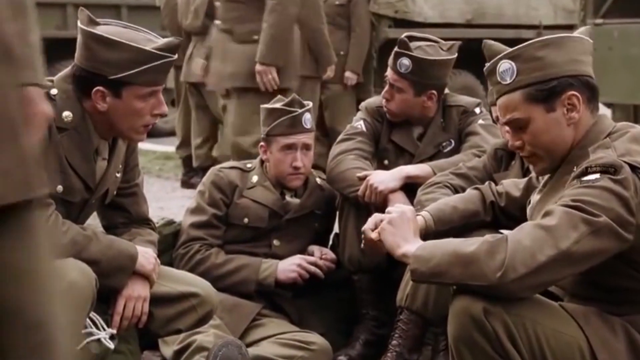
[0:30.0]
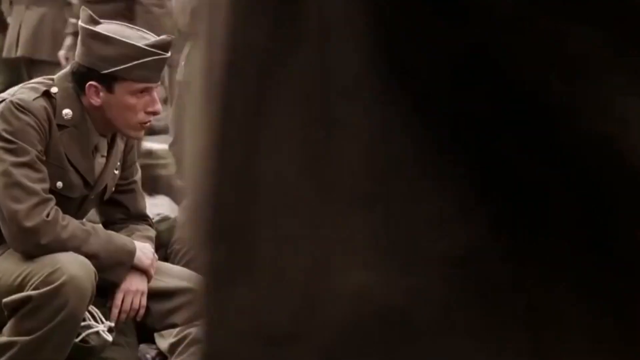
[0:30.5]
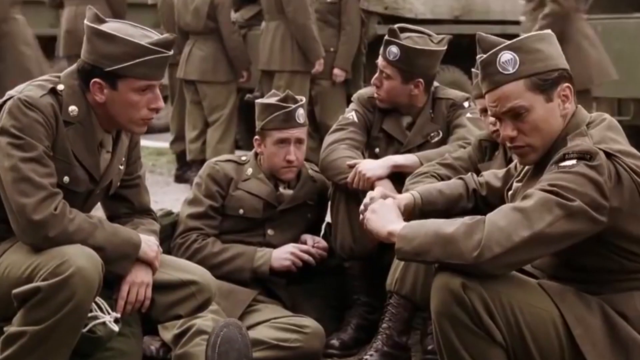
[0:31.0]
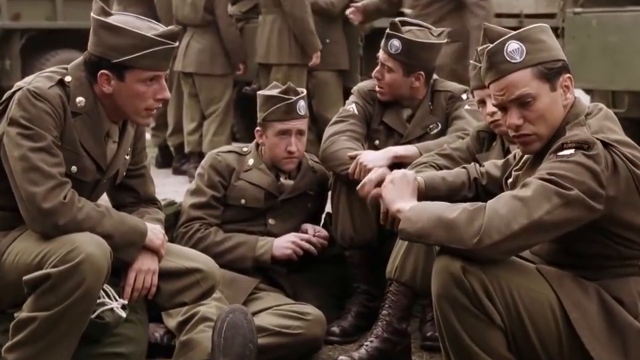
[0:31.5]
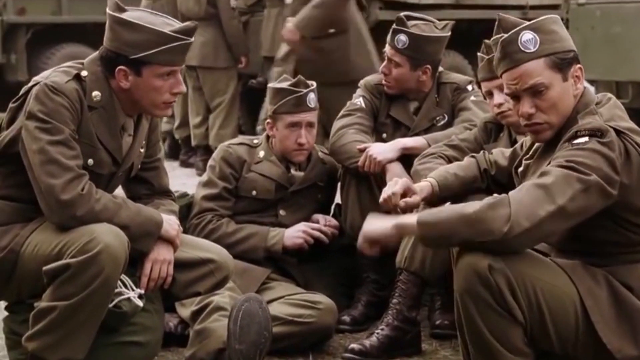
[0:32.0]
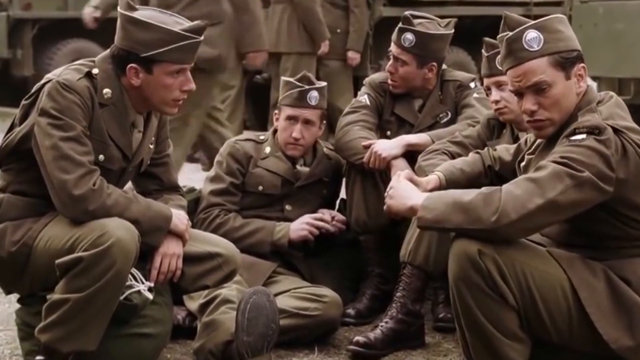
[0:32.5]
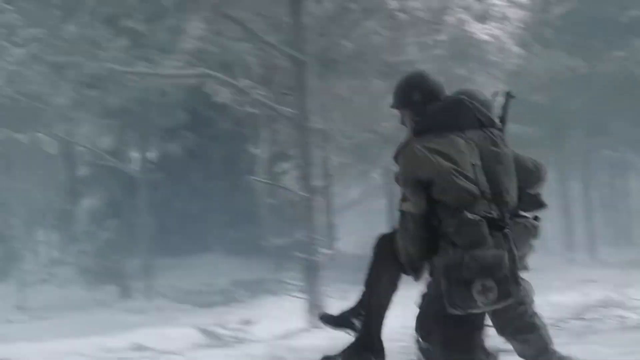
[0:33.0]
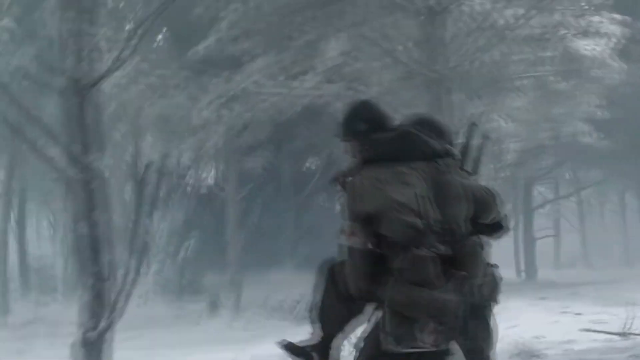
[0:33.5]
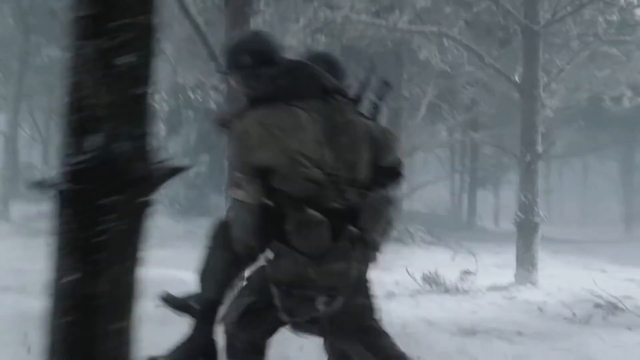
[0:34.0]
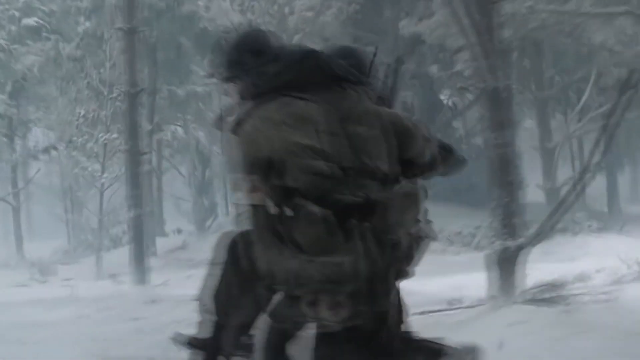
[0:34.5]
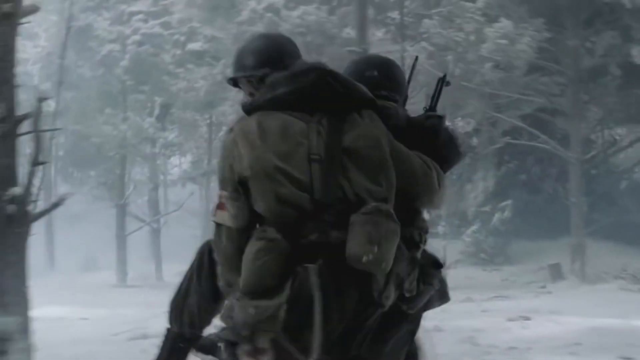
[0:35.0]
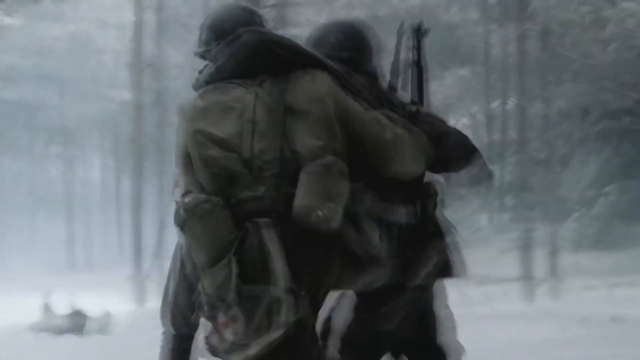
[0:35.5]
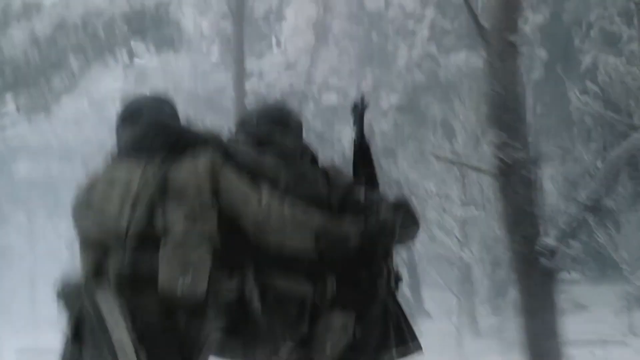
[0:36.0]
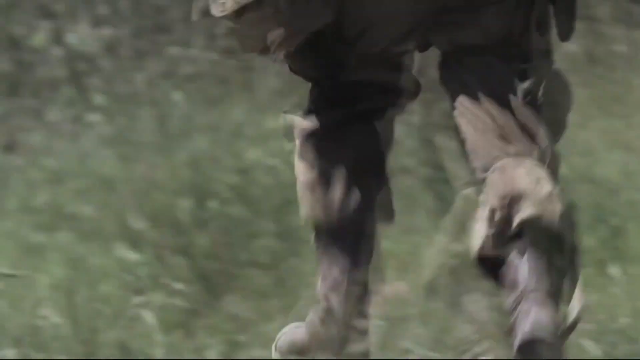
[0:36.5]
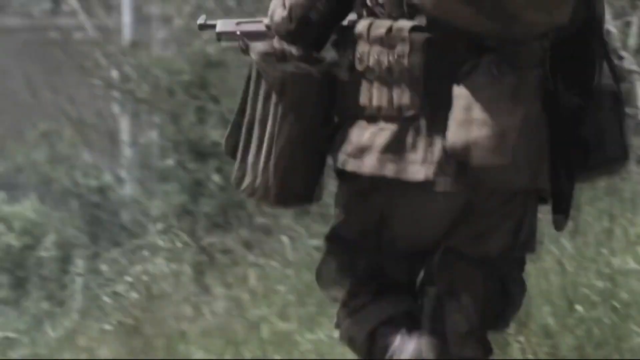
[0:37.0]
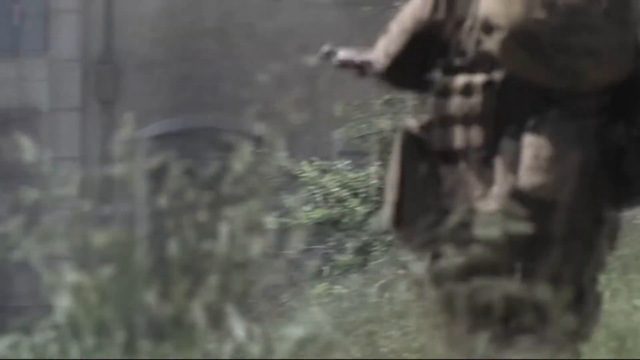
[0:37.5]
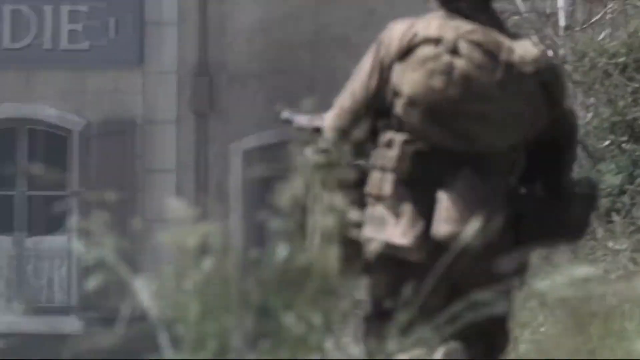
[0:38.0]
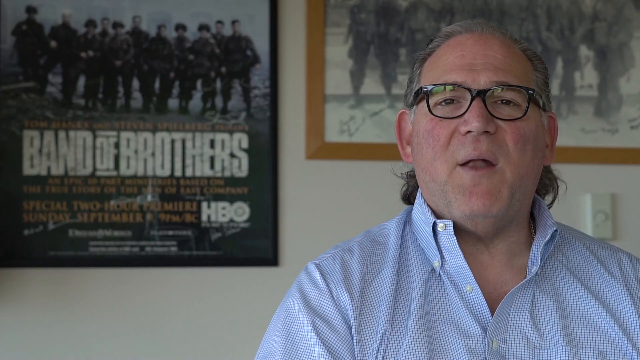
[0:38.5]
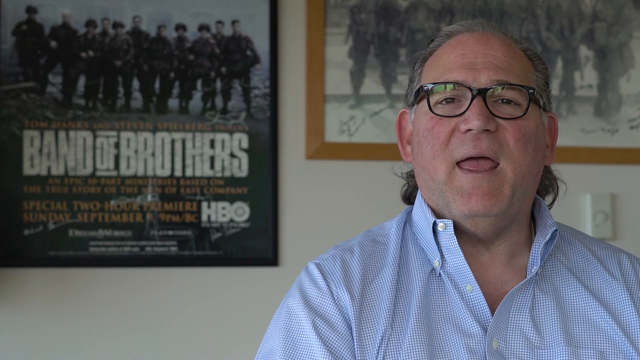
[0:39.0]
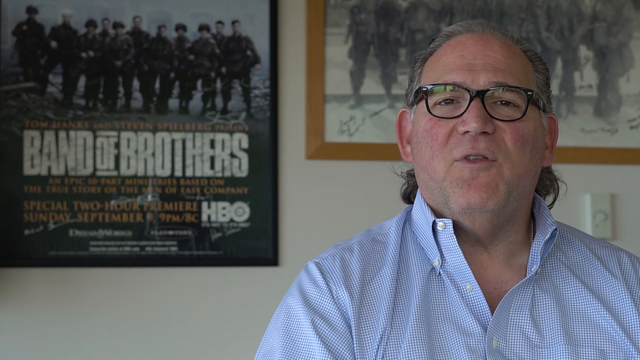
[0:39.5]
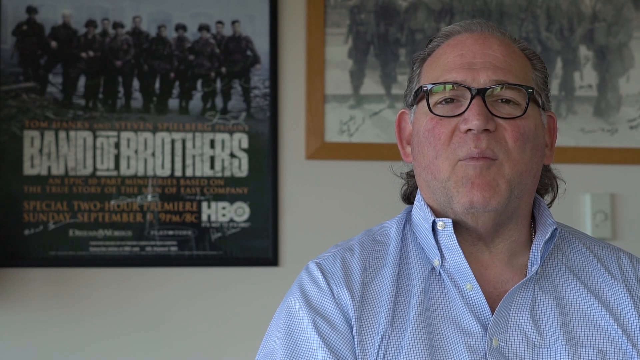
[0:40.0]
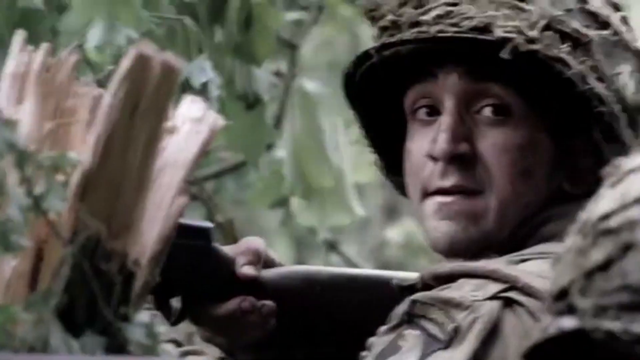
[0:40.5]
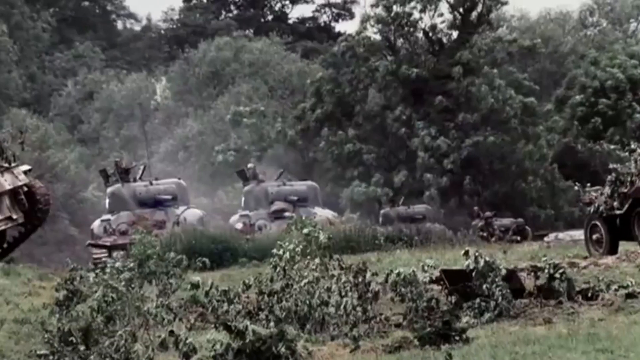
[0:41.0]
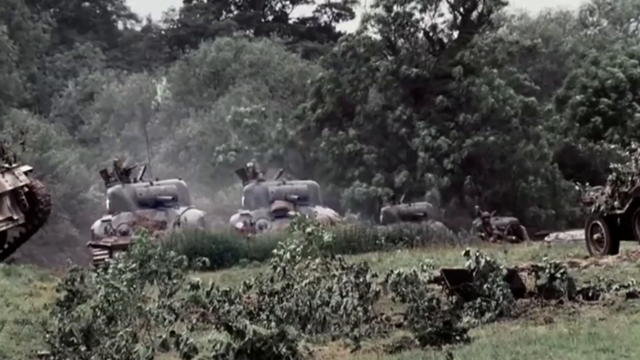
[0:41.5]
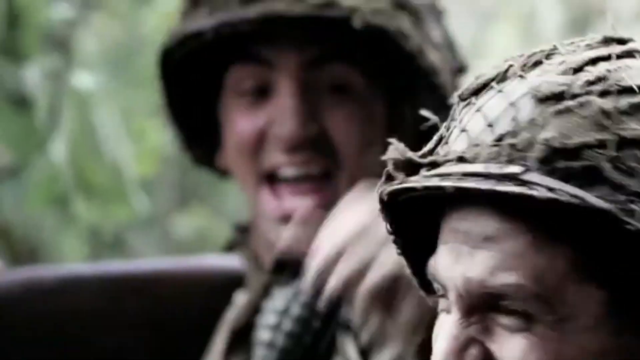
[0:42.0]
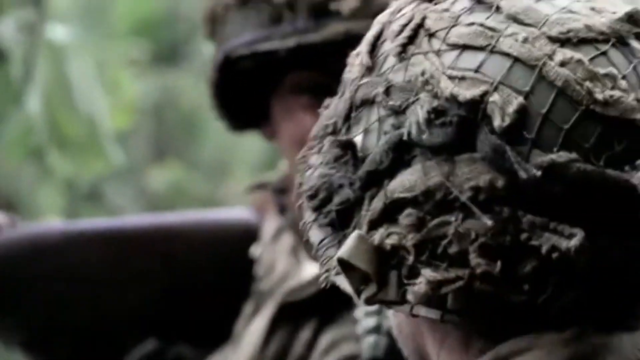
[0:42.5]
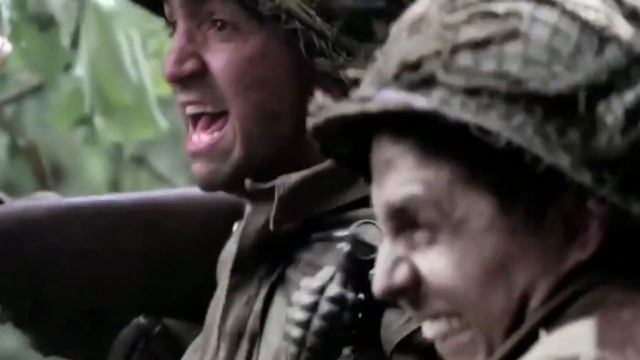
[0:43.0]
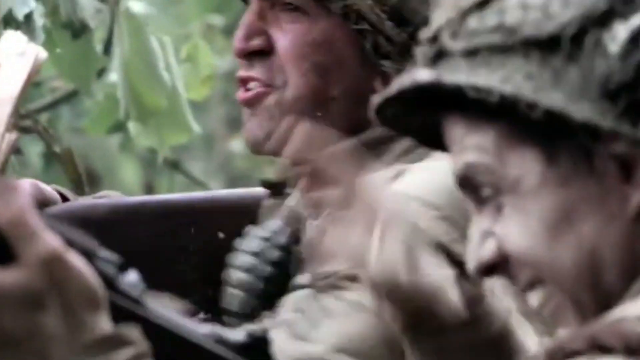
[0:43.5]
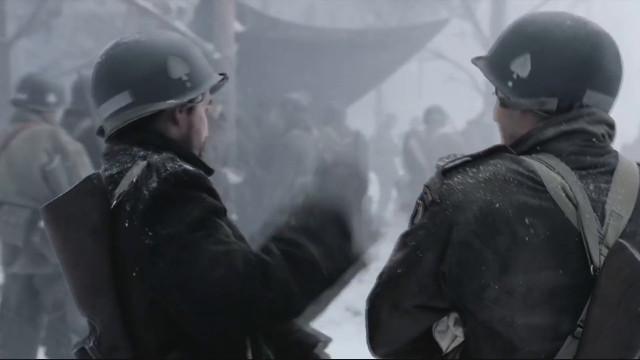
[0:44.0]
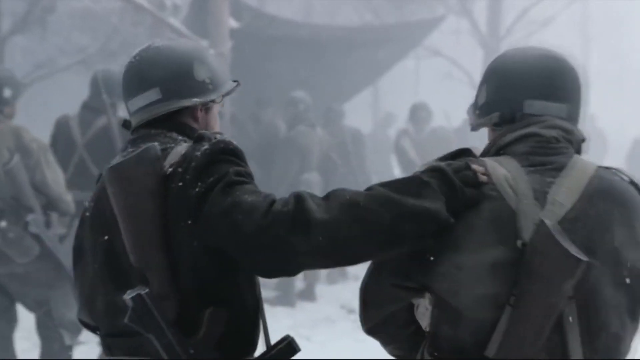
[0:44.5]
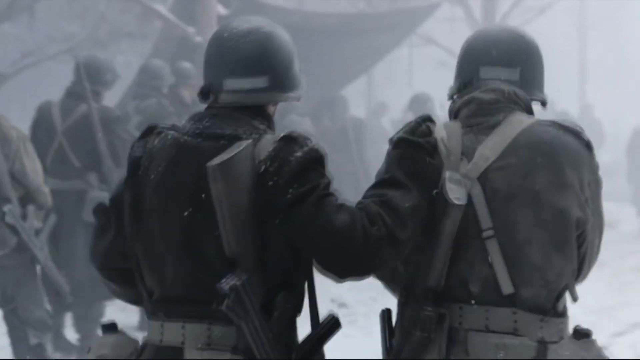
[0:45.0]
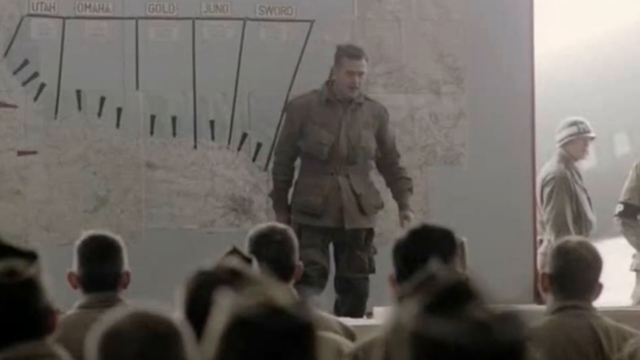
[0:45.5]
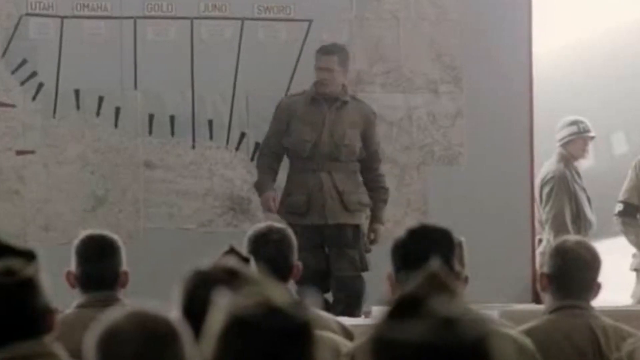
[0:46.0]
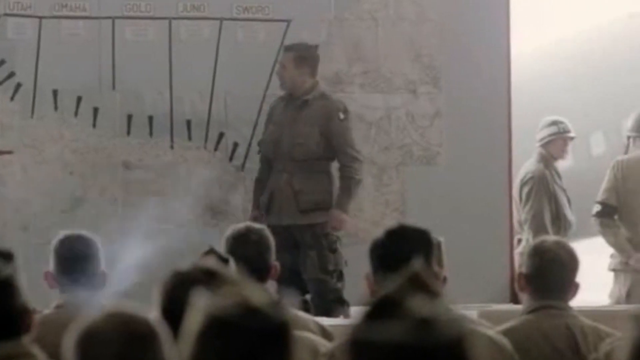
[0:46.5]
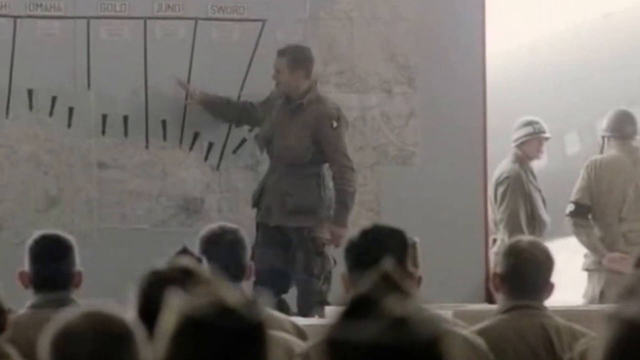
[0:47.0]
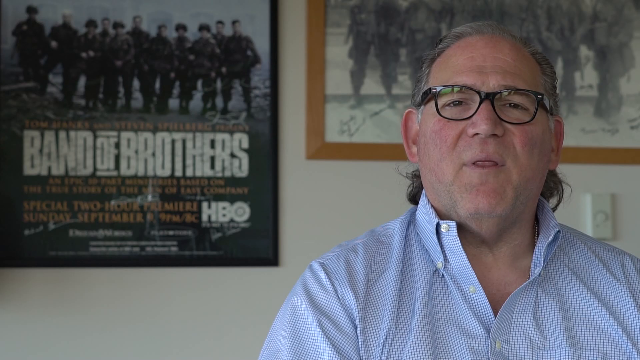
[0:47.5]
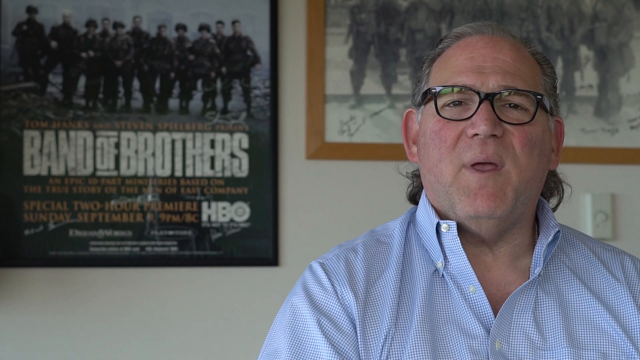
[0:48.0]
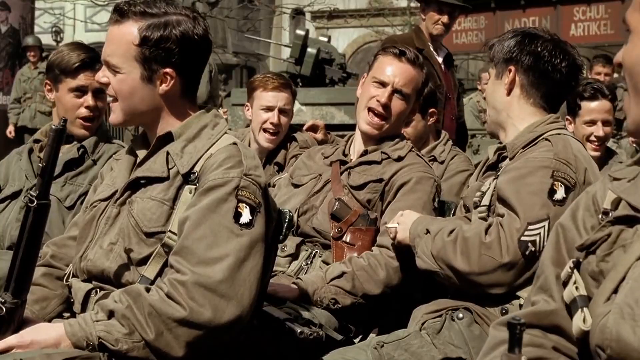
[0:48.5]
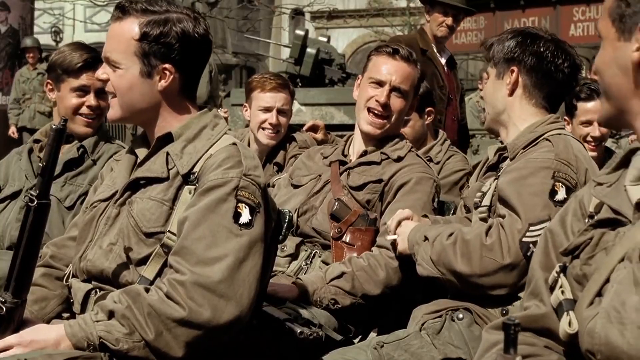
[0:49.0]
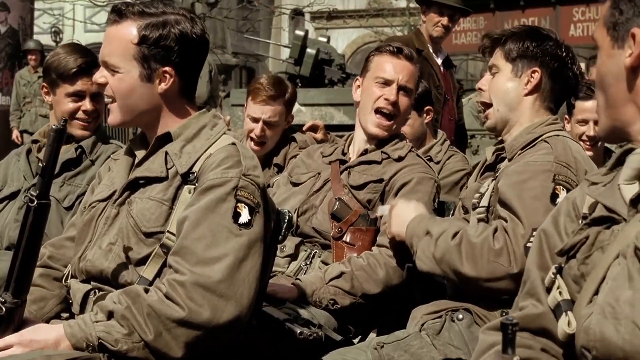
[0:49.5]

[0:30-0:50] Soldiers in color resembling old 1960s color sit, talking and waiting, with other soldiers standing behind them and some walking around. A winter scene shows someone being rescued, carried by two other soldiers, probably an injured soldier. On a sunnier-looking day, a soldier runs toward a building as the camera follows. The man in the blue shirt and black-rimmed sunglasses, with a roundish face, talks to the camera, with a Band of Brothers movie sign on the wall behind him. Footage from the movie Band of Brothers follows: soldiers in tree-line areas, military vehicles firing weapons, two soldiers smiling, two soldiers who look like they are congratulating each other, and a commander or someone directing soldiers. The man in the blue shirt and black-rimmed sunglasses appears, then a color photo of other soldiers.